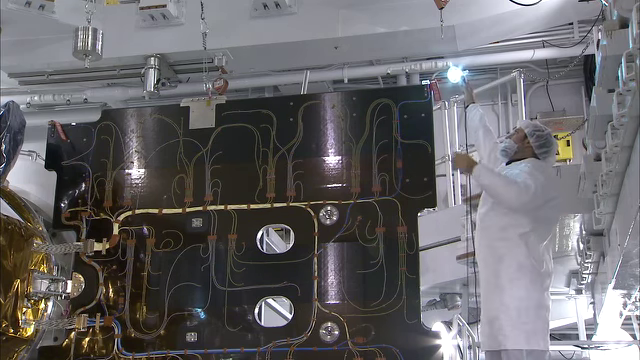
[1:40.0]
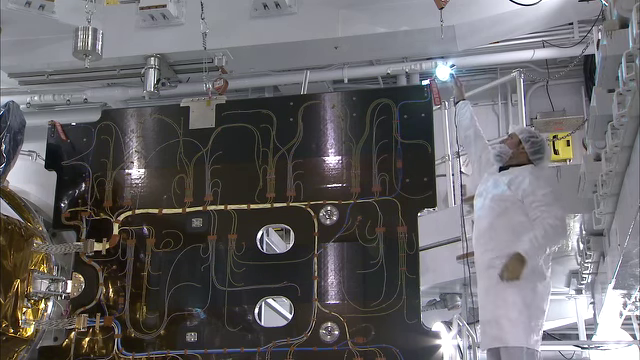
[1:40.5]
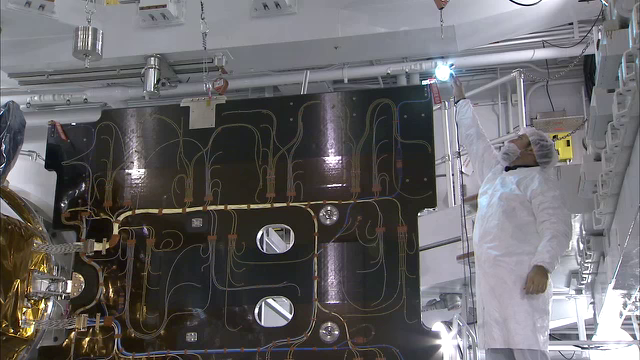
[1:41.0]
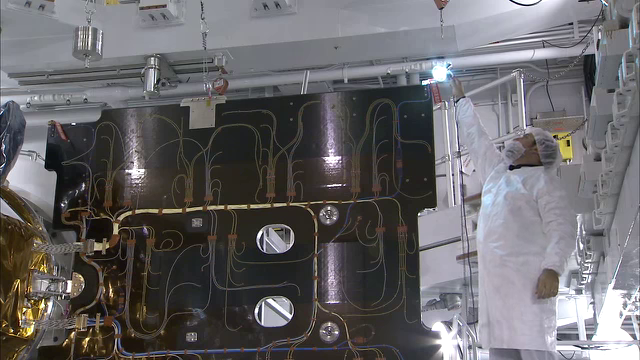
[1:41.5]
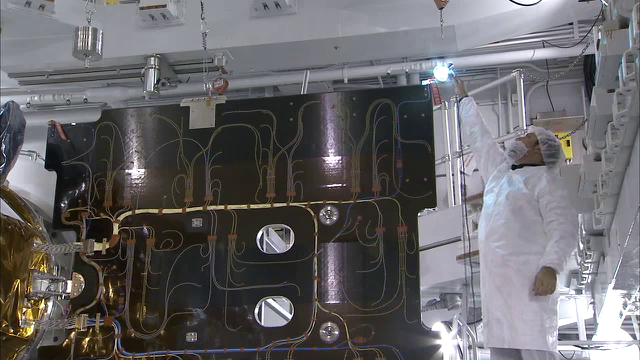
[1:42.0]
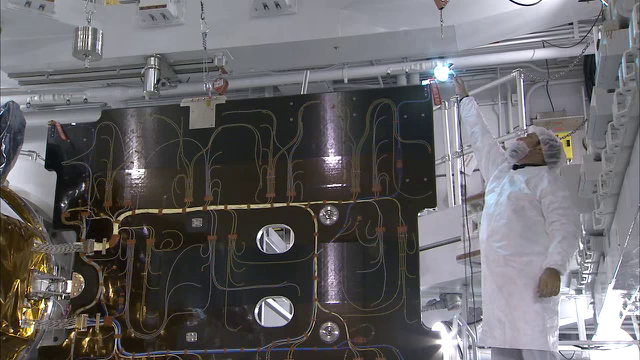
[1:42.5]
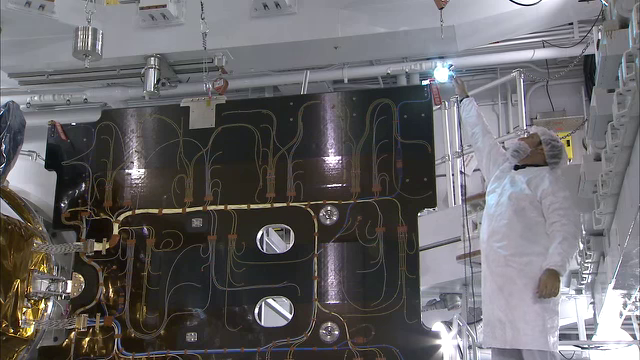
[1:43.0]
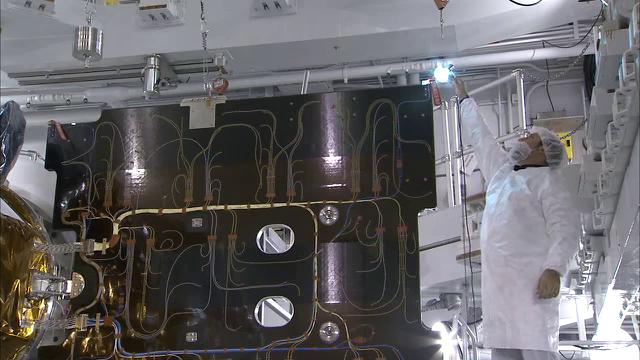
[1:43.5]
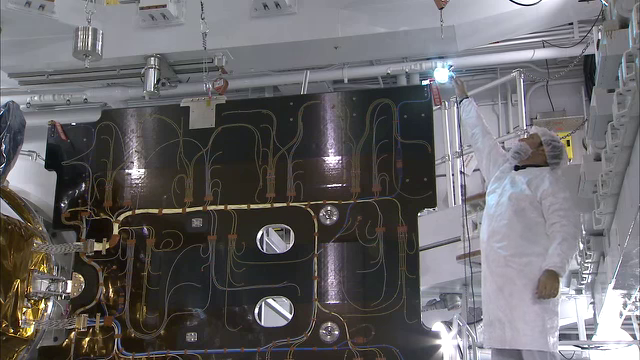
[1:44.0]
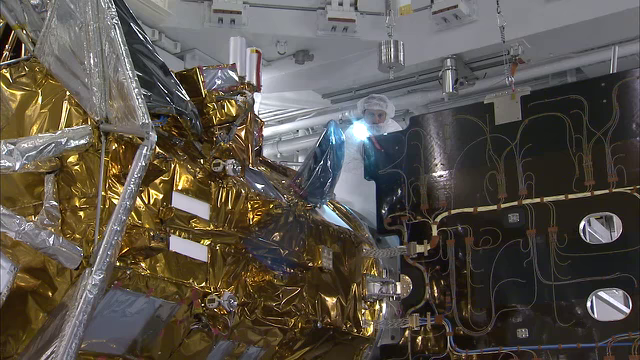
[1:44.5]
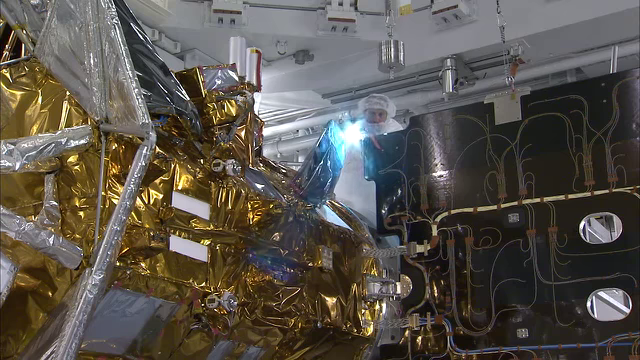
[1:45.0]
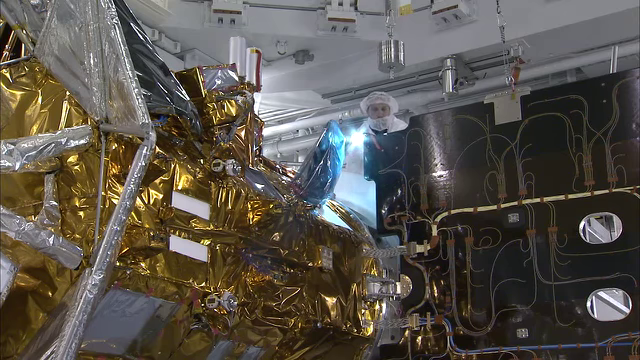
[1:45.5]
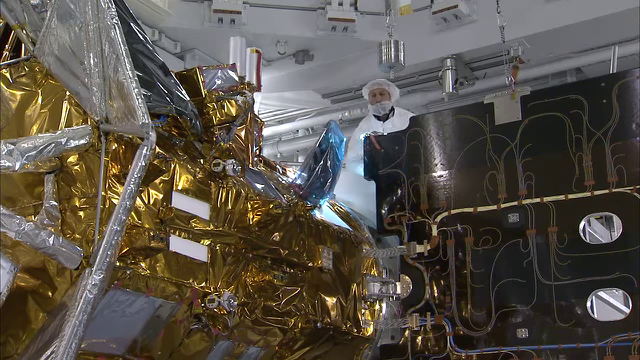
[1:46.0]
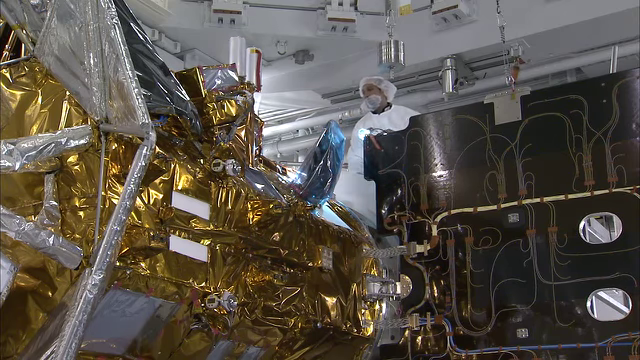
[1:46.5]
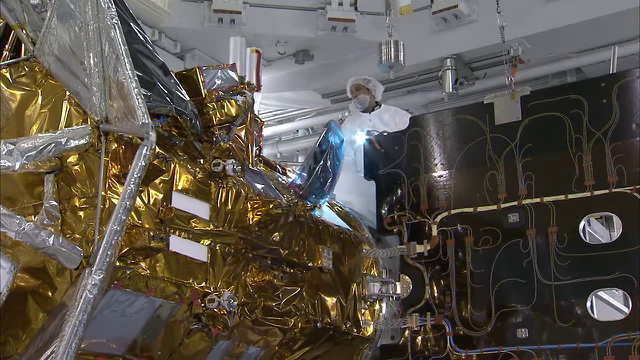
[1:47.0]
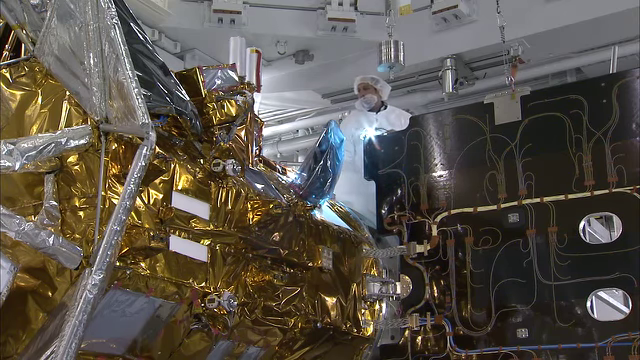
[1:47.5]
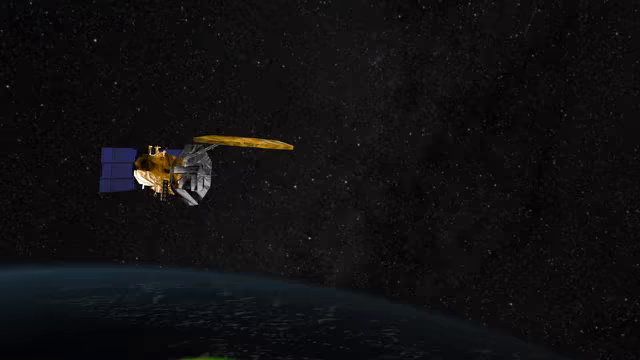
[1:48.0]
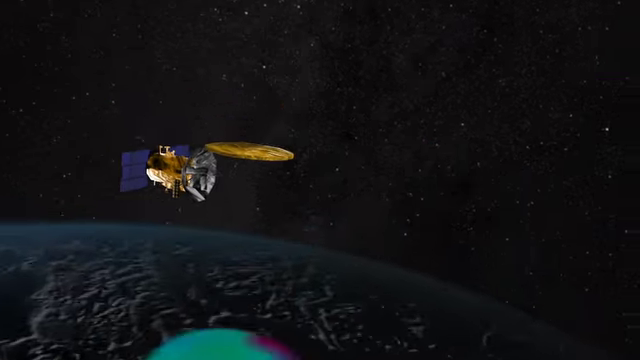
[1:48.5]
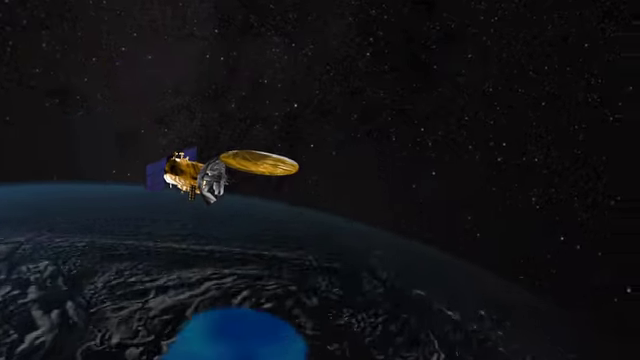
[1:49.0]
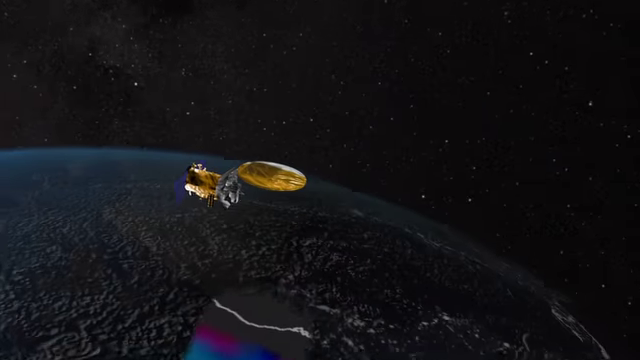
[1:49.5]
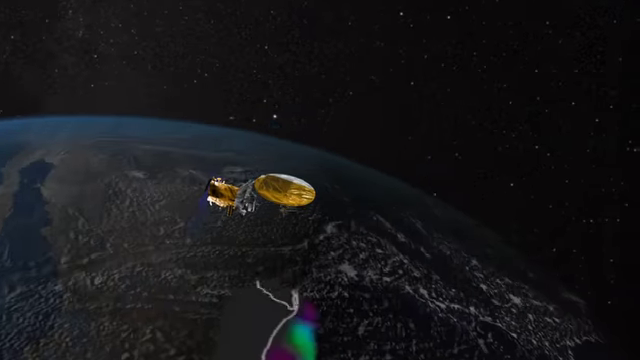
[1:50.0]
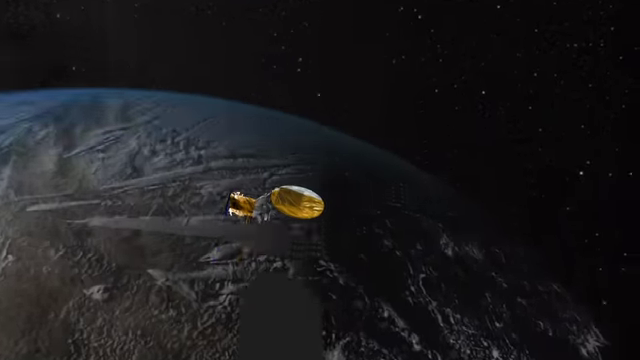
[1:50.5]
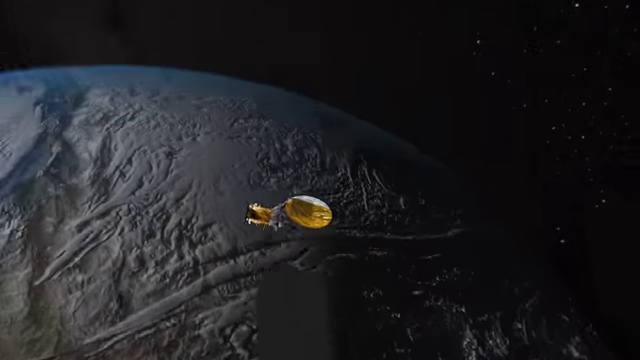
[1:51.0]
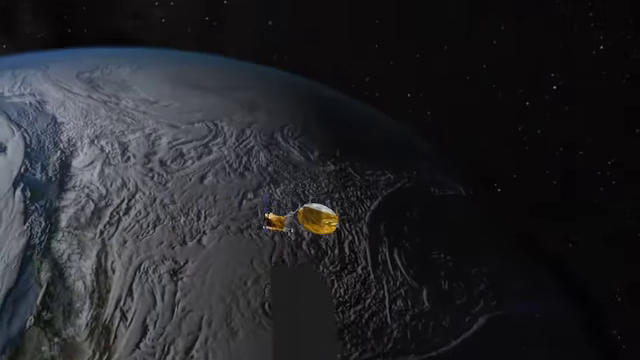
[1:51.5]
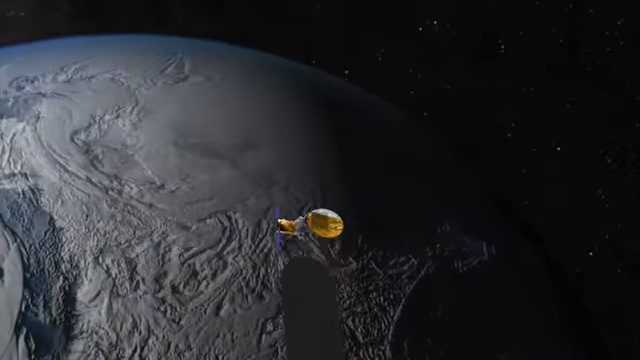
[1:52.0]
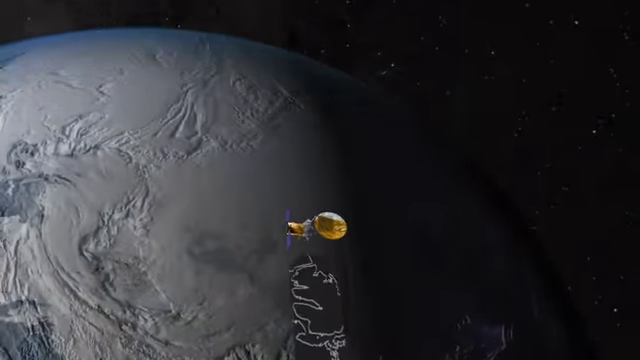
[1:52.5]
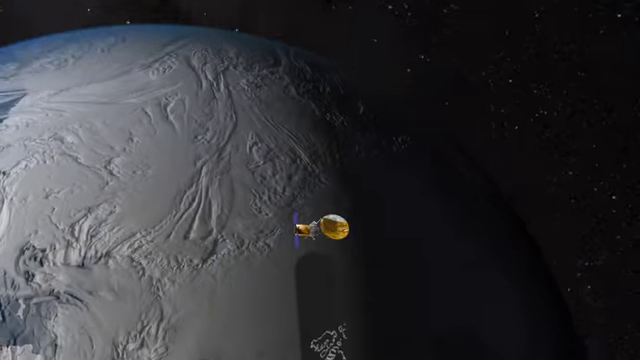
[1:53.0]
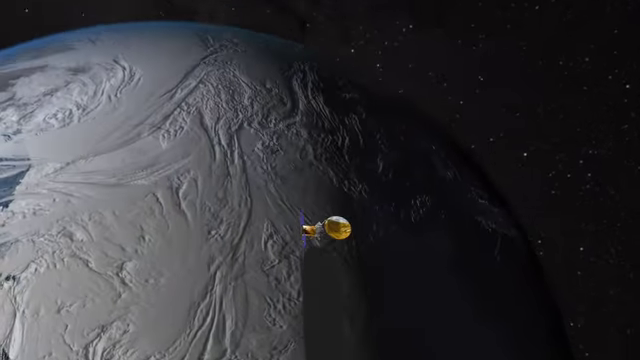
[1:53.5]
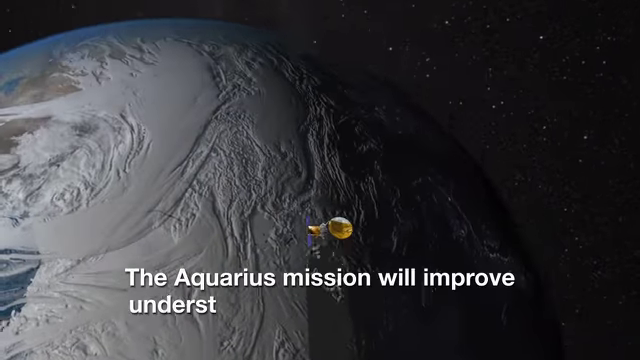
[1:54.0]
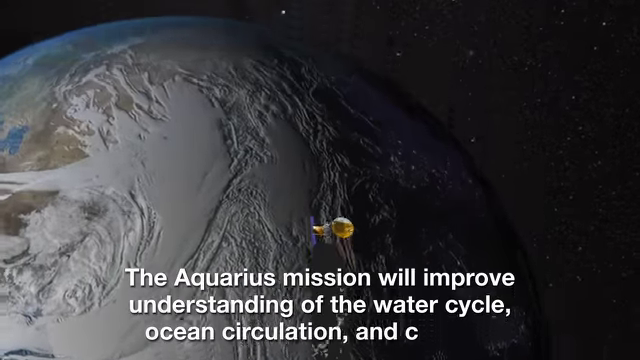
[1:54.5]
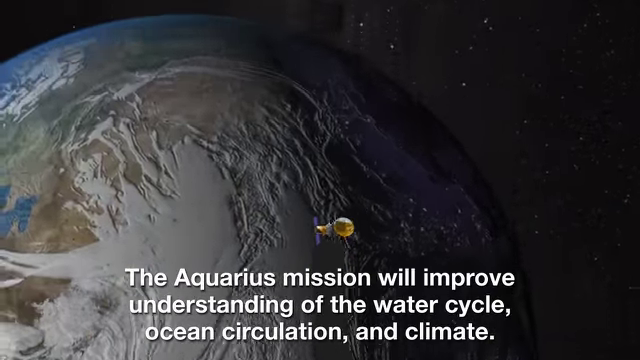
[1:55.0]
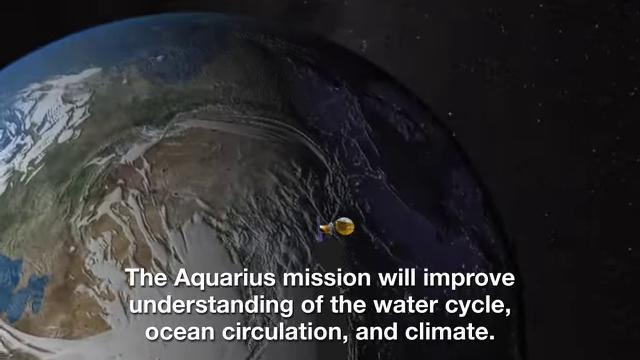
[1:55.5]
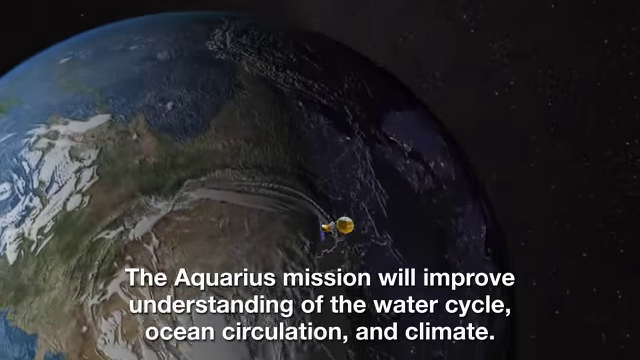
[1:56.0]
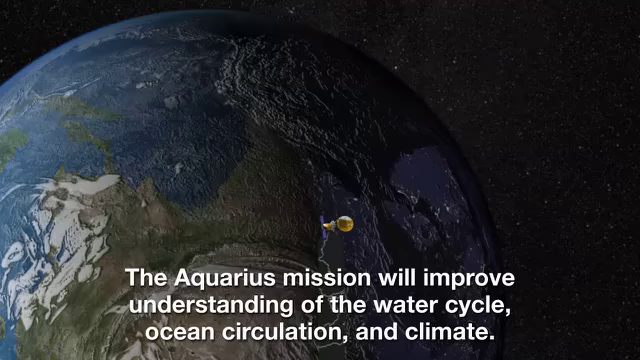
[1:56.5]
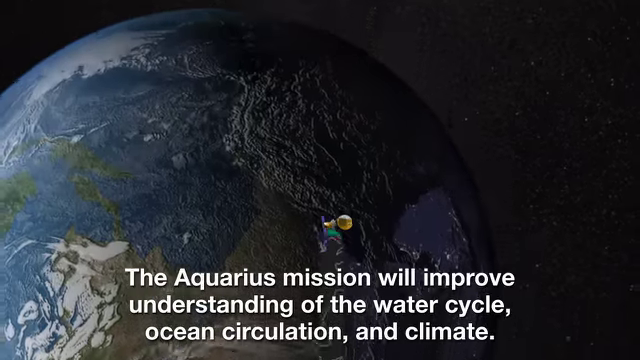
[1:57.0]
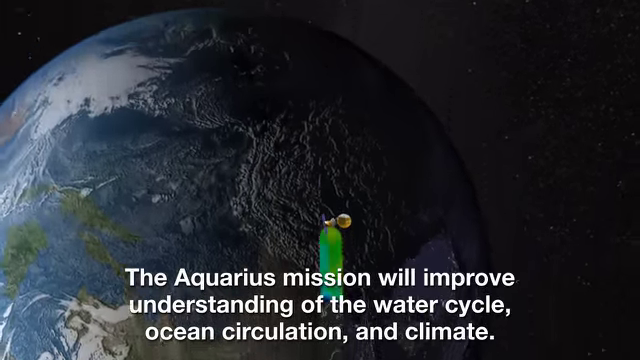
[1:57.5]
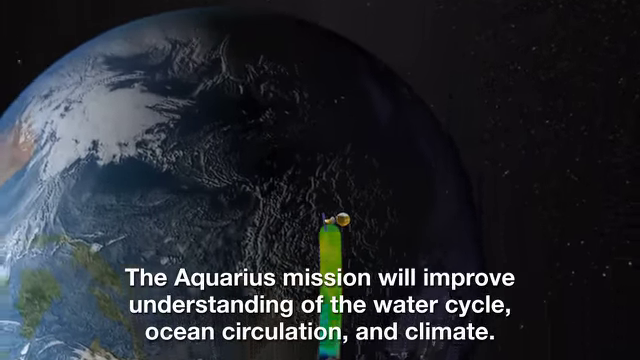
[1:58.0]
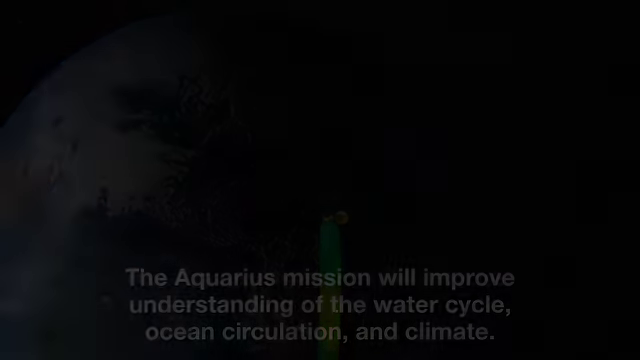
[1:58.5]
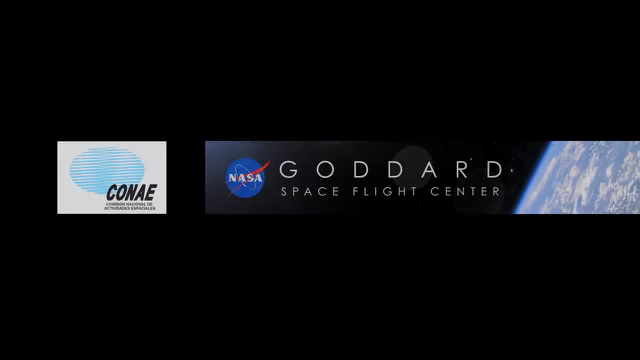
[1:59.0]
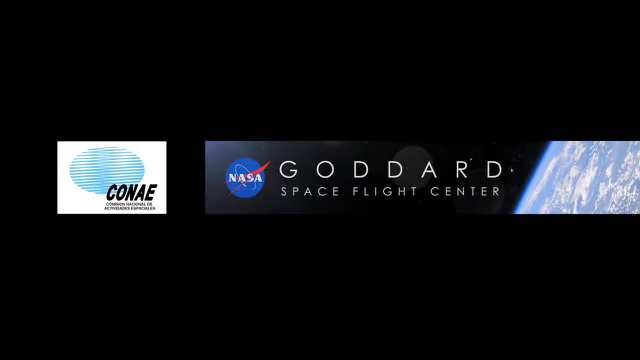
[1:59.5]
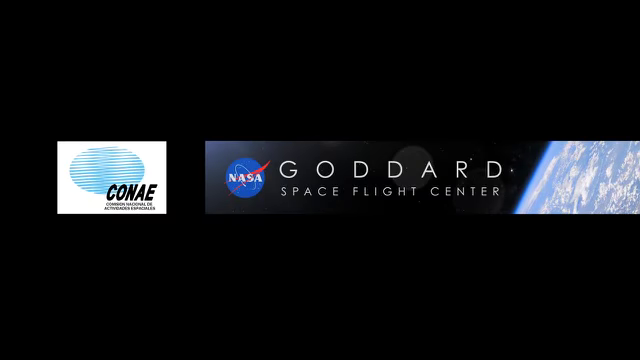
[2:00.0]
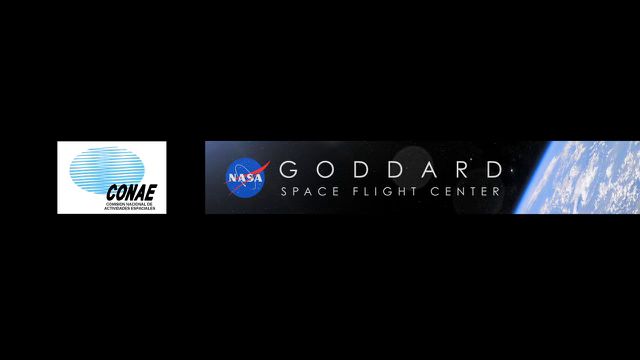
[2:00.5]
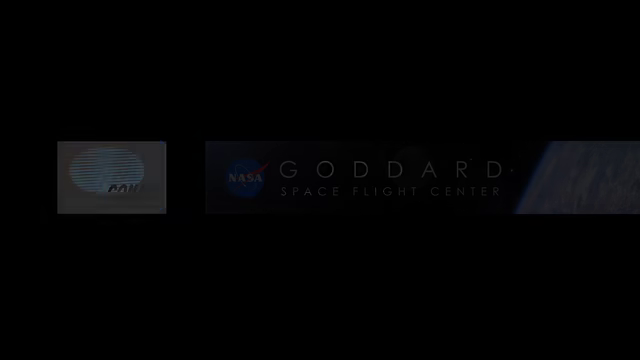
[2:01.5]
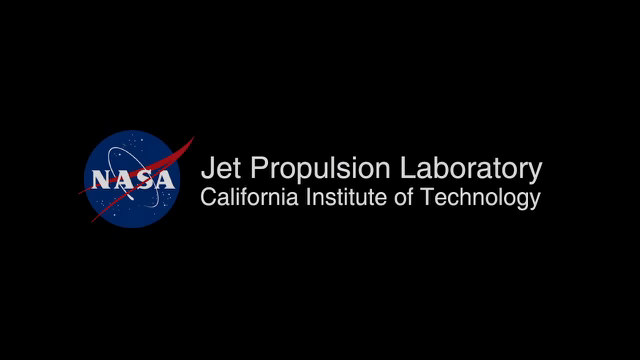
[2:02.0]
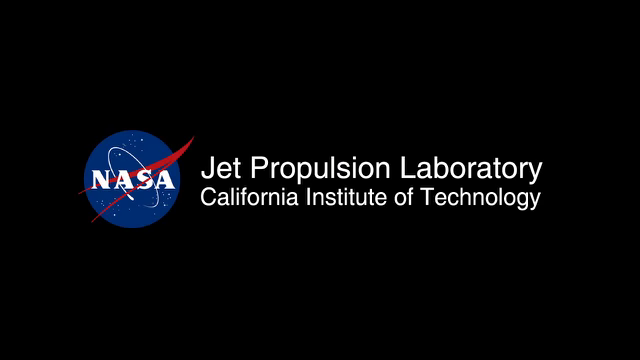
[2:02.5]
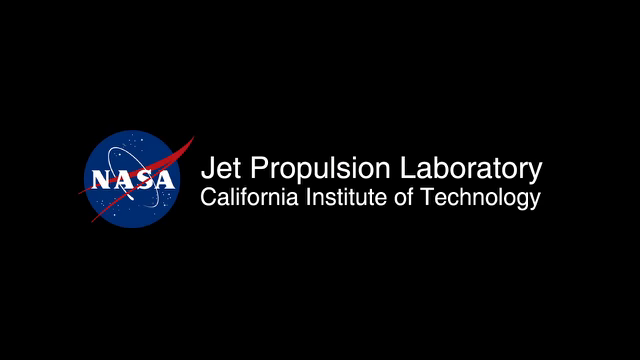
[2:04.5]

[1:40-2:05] The attached panel is black and covered with lines connecting here and there, almost like wires; it kind of looks like a painting of growing plants. A technician or scientist stands very tall with a flashlight in the top right corner, reaching up on his tiptoes and looking. A scientist or technician, possibly a different one, is higher up, above the panel, with a flashlight, a mask, a white outfit, a hairnet and gloves, probably inspecting it. Aquarius is then shown going around the Earth very quickly, with the text "the Aquarius mission will improve understanding of the water cycle, ocean circulation, and climate." The video is from the Goddard Space Flight Center.